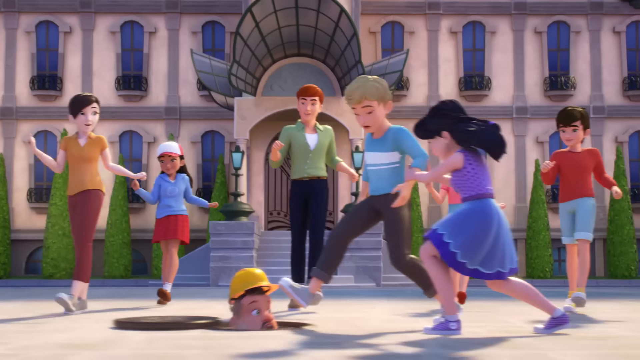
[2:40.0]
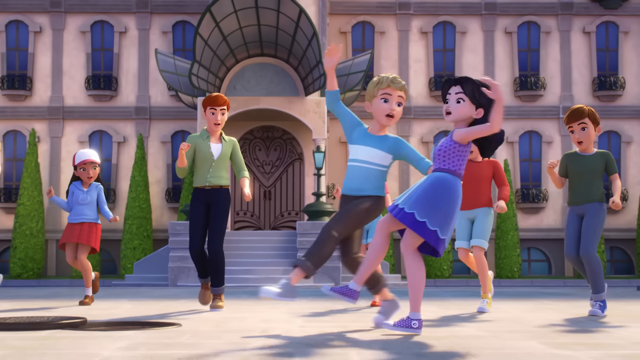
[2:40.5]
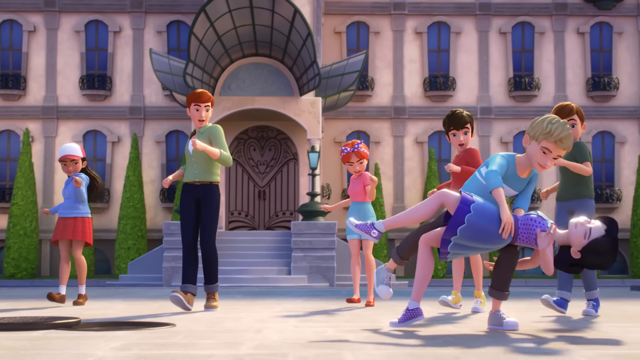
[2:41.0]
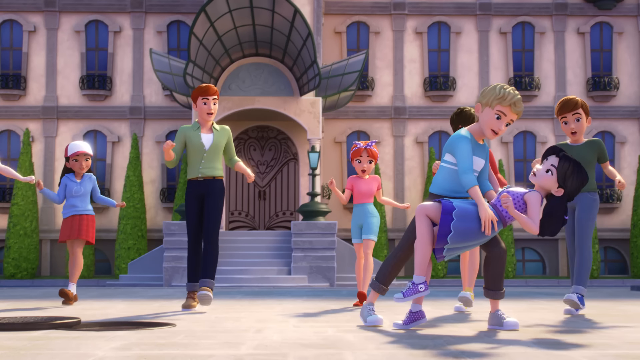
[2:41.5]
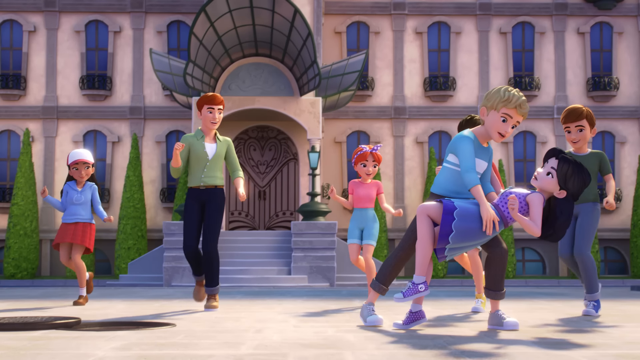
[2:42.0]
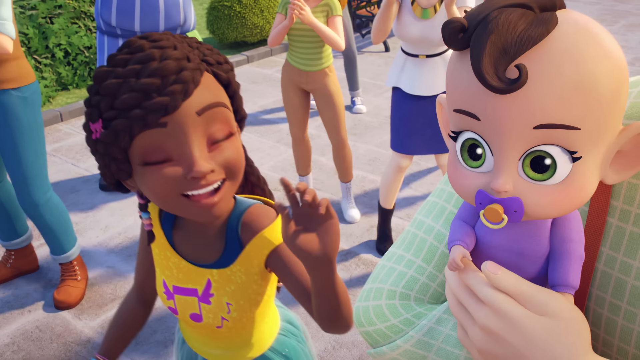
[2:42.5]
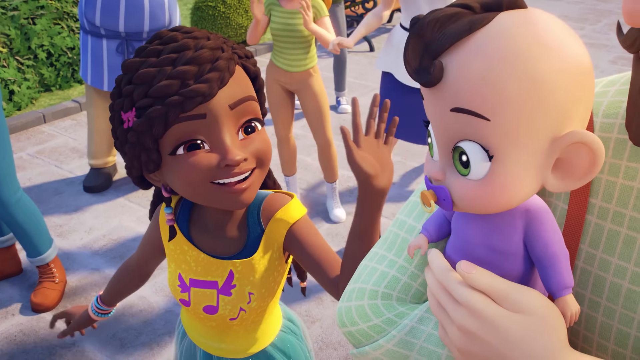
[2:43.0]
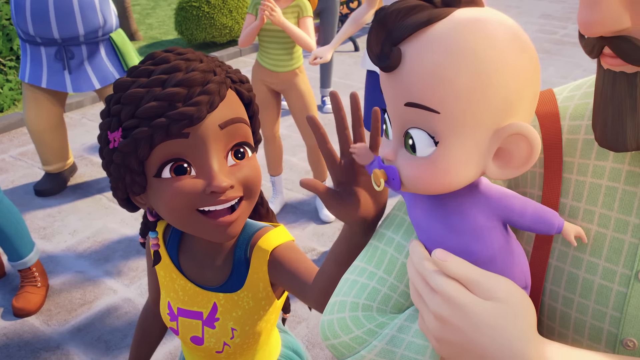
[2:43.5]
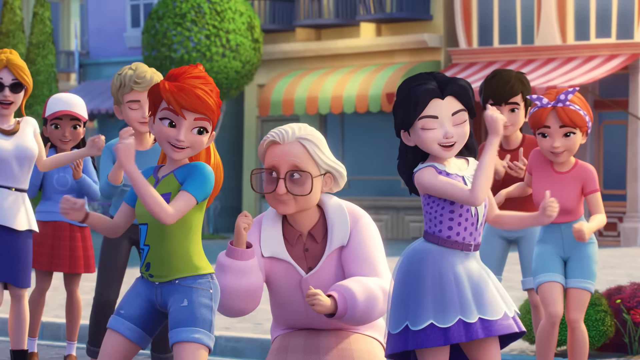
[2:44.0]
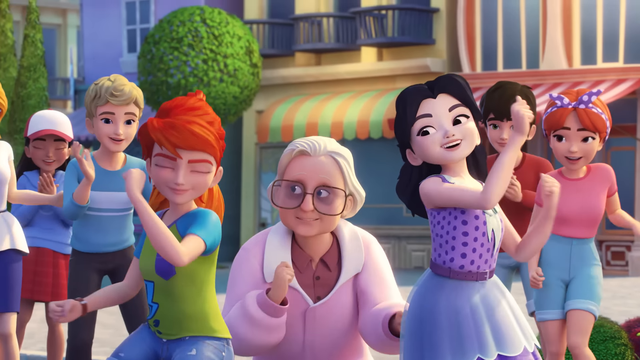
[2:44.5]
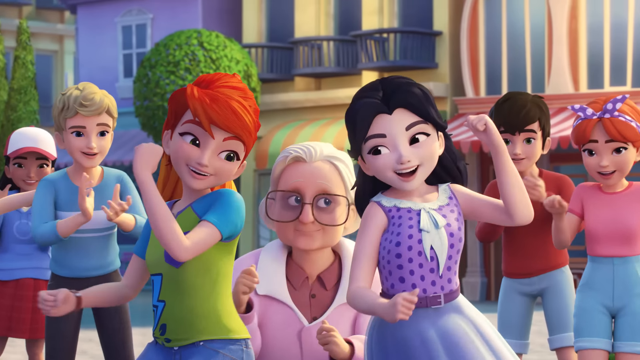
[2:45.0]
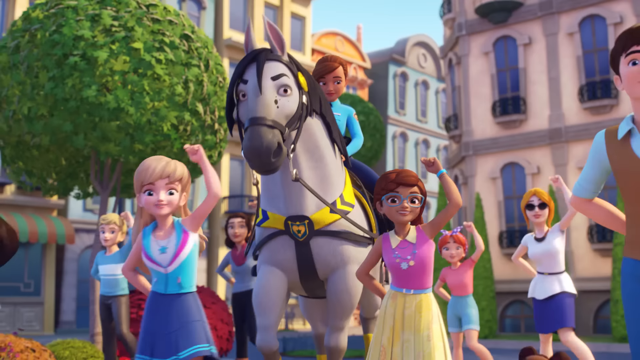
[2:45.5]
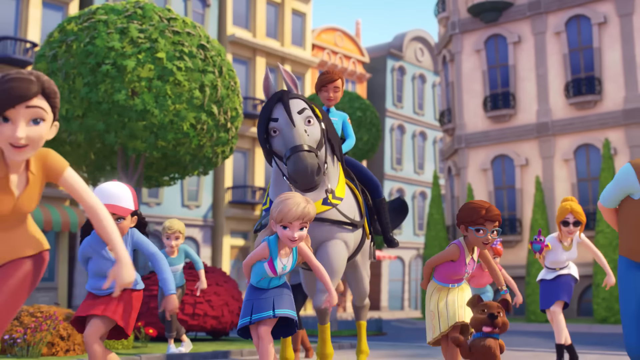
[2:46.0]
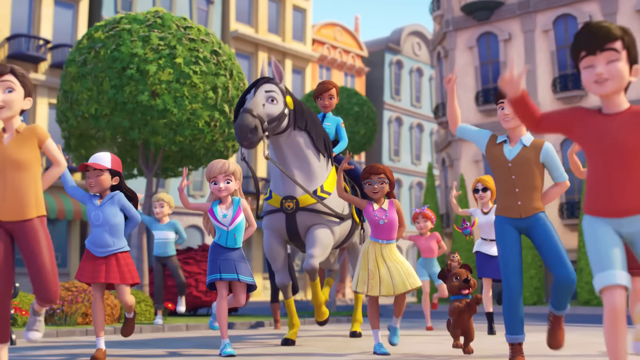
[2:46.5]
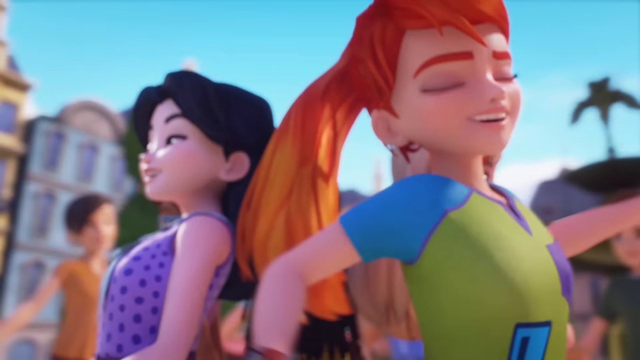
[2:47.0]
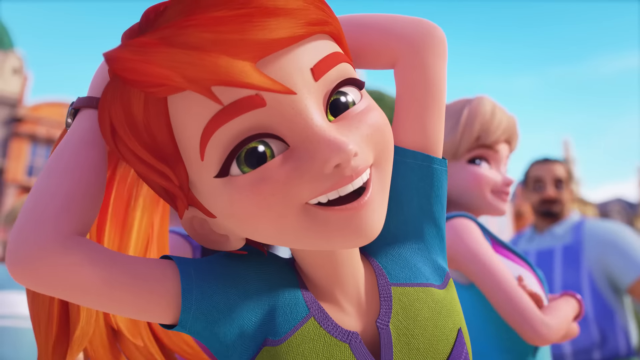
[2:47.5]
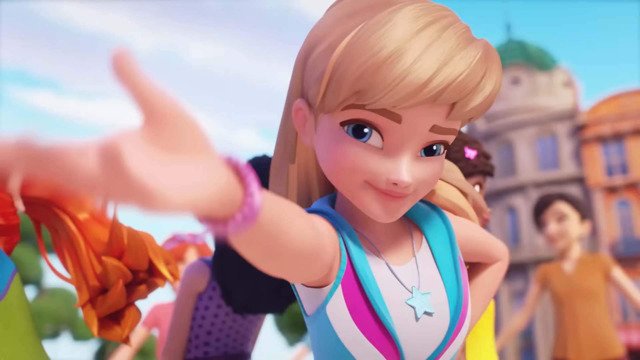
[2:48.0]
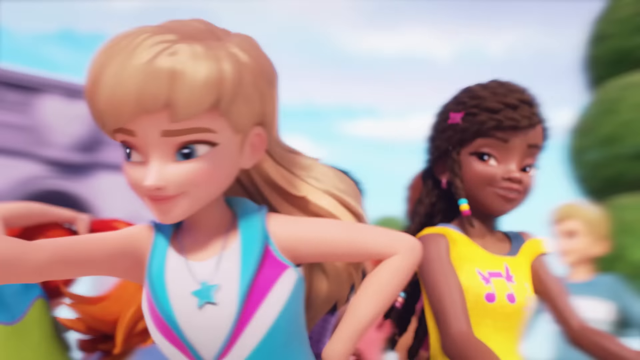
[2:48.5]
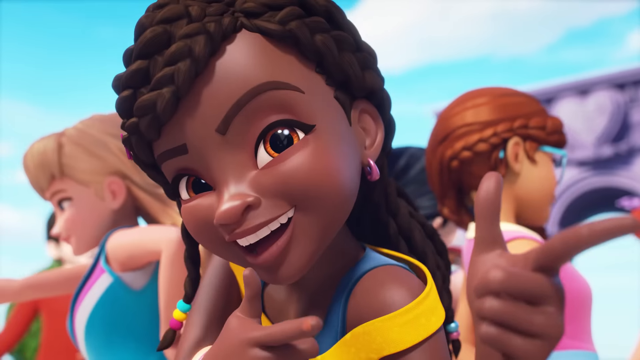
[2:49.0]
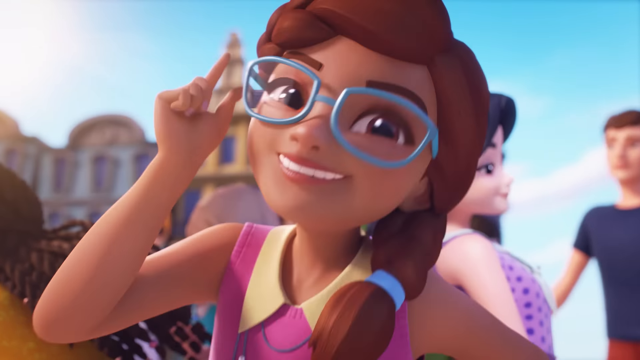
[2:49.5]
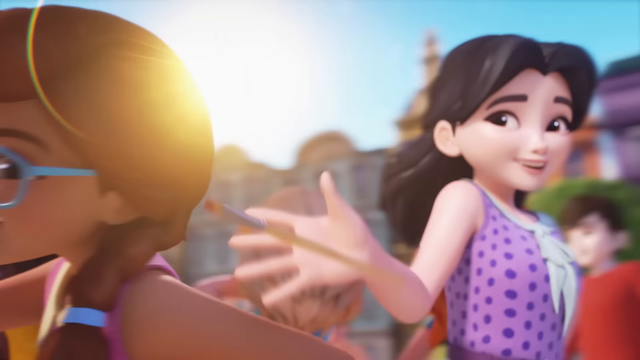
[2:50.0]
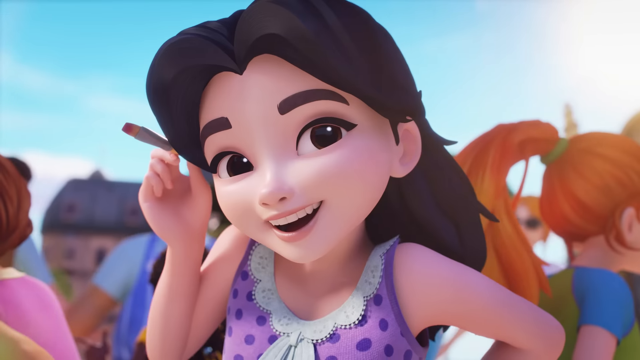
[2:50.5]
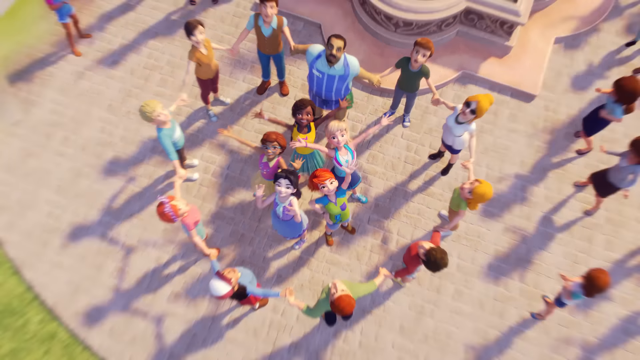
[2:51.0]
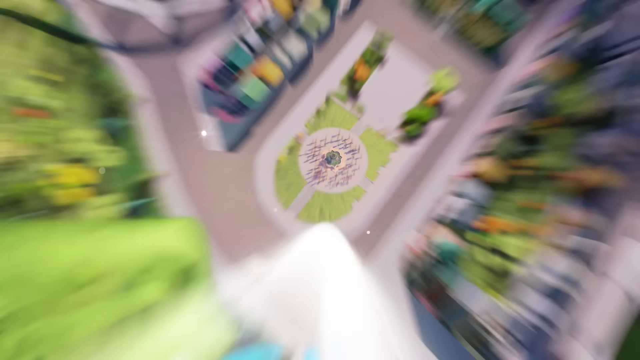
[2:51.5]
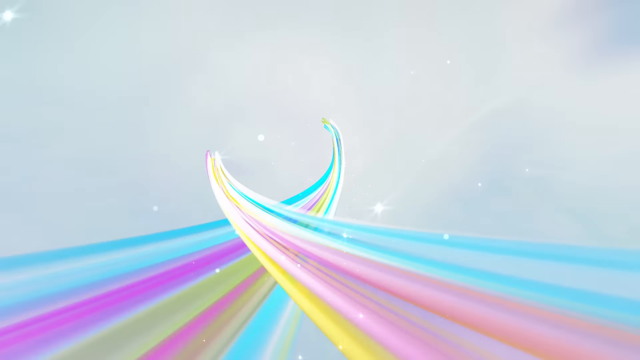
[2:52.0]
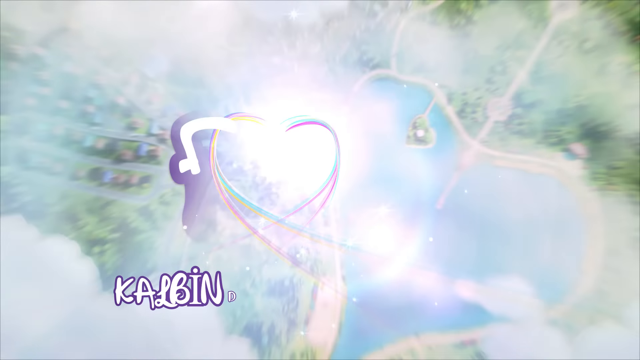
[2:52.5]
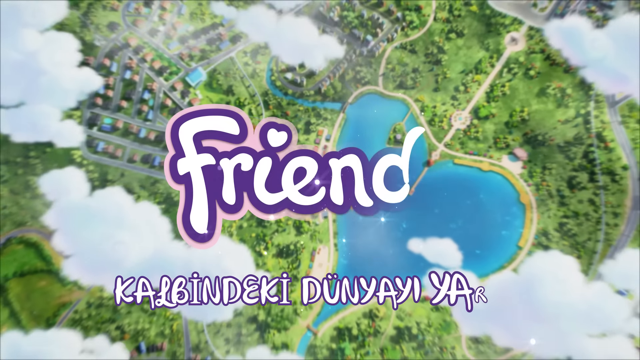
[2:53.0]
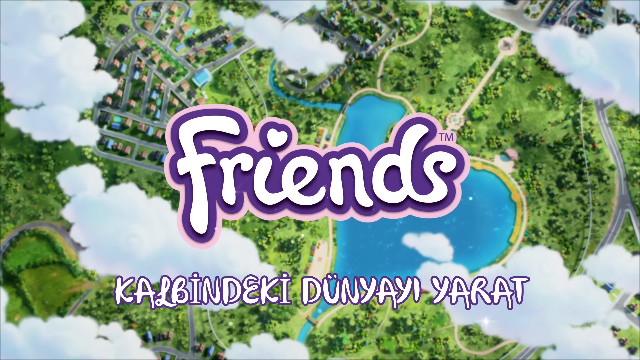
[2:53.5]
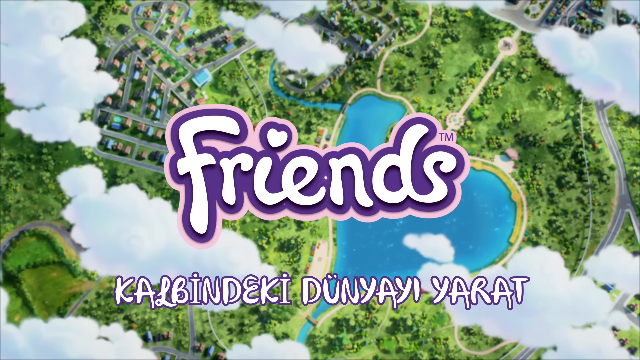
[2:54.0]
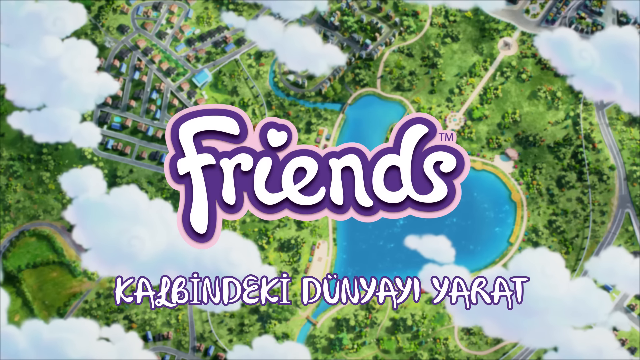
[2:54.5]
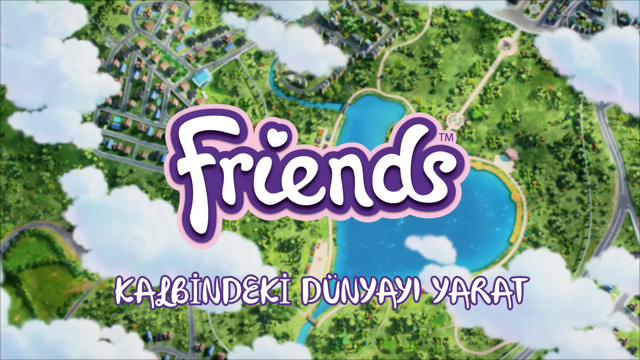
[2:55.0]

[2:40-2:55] Emma looks like she is about to trip, and a boy kind of catches her before she falls. Everybody is kind of interacting with someone else in the neighborhood: Andrea high-fives the baby, and Mia and Olivia dance with the old woman Mia saved. The horse is still there. The girls are introduced once more as they dance in a circle, and everyone stops to applaud the girls in the middle. The video ends with the name of the show, possibly "Friends", which appears to be a Turkish show.